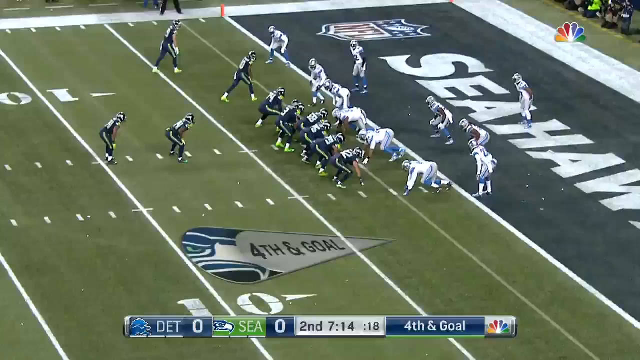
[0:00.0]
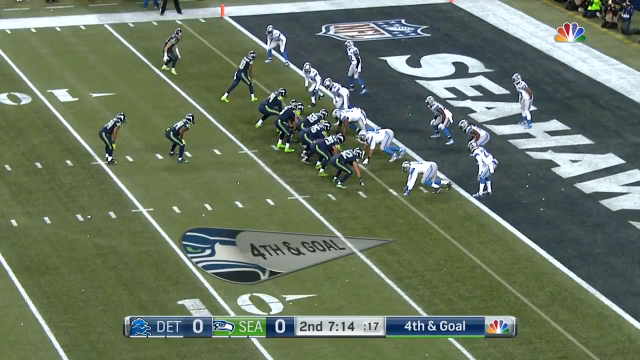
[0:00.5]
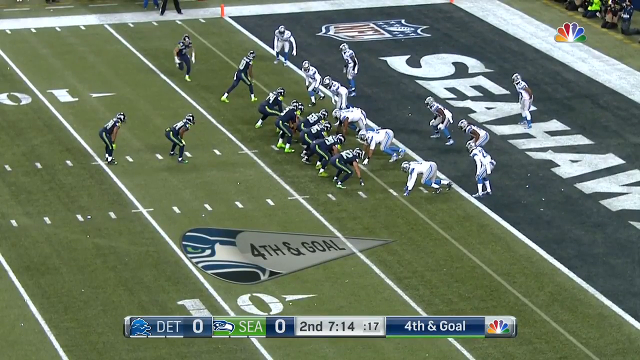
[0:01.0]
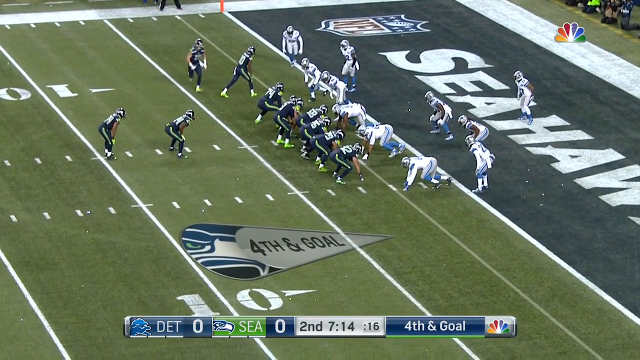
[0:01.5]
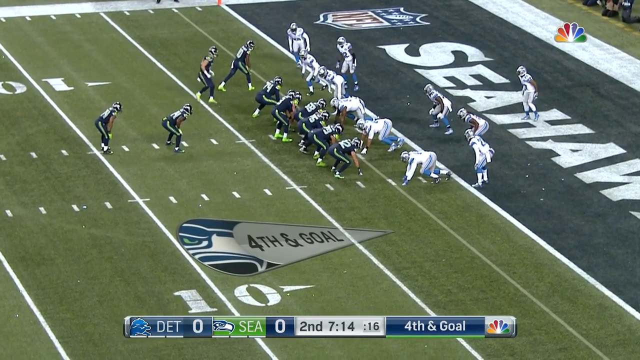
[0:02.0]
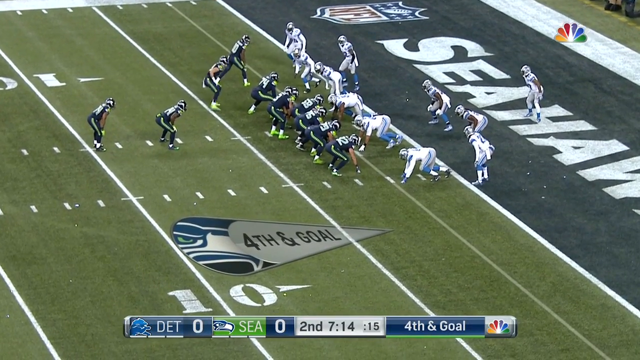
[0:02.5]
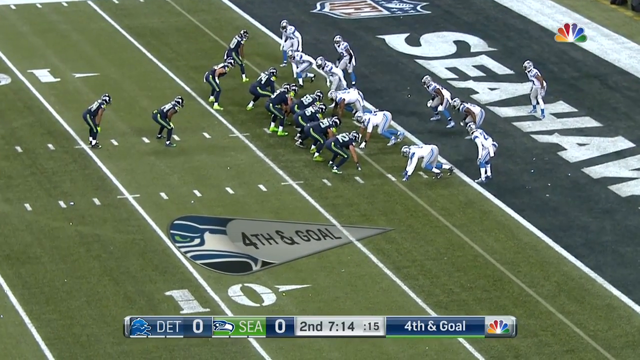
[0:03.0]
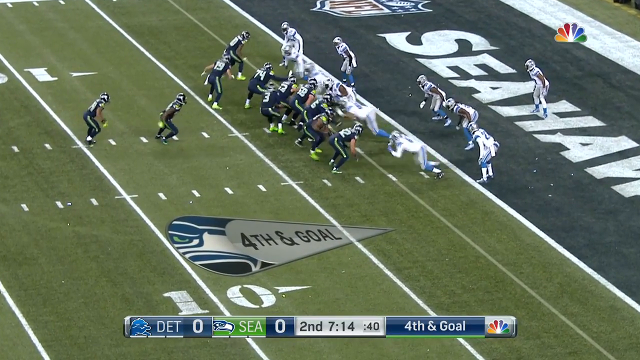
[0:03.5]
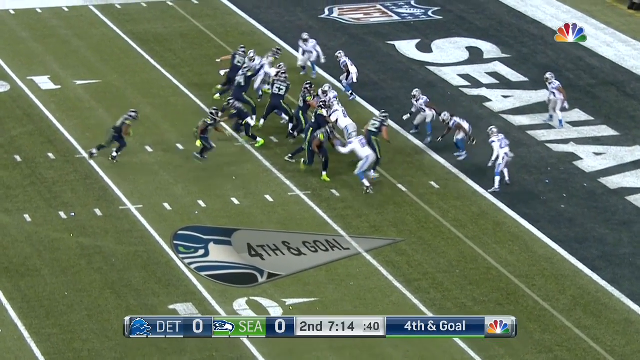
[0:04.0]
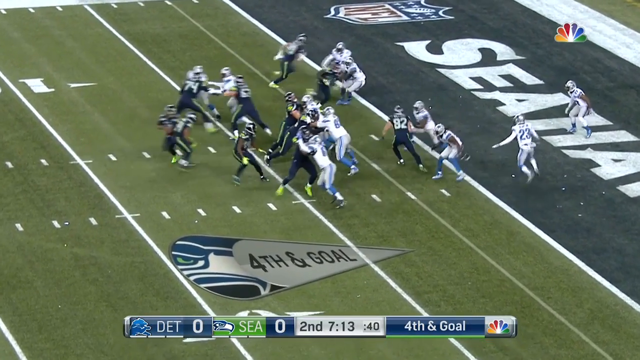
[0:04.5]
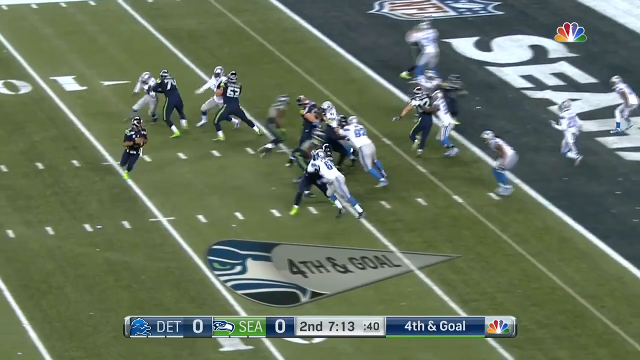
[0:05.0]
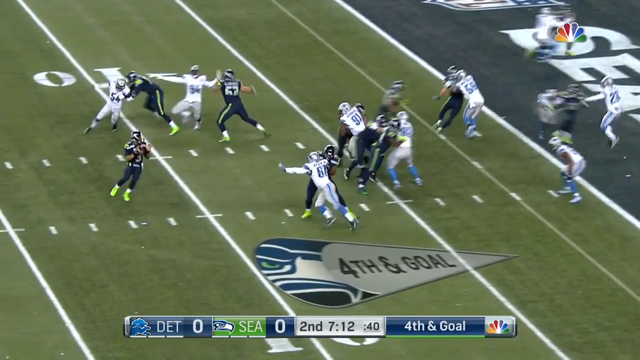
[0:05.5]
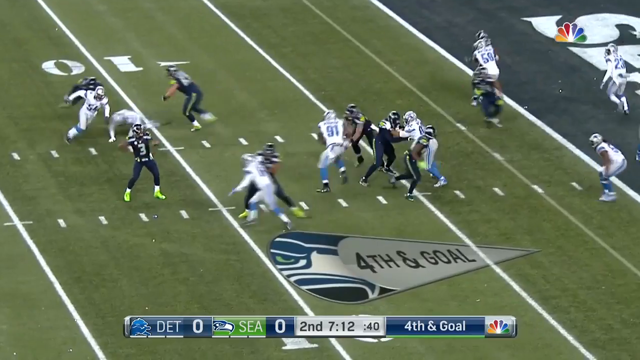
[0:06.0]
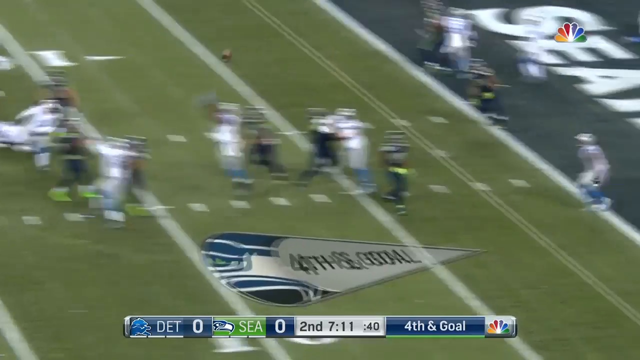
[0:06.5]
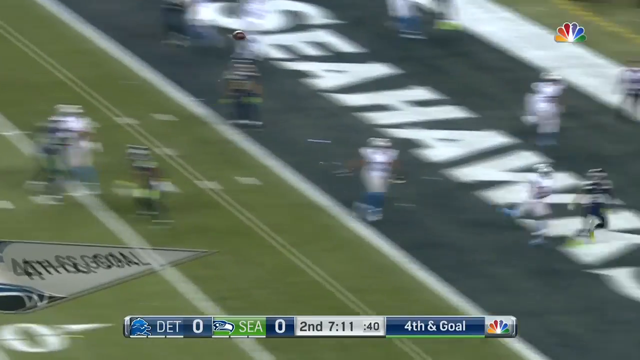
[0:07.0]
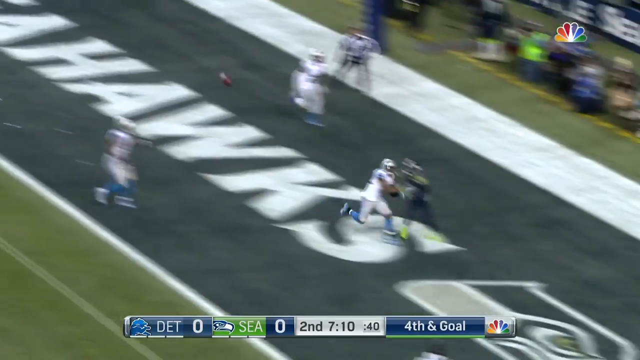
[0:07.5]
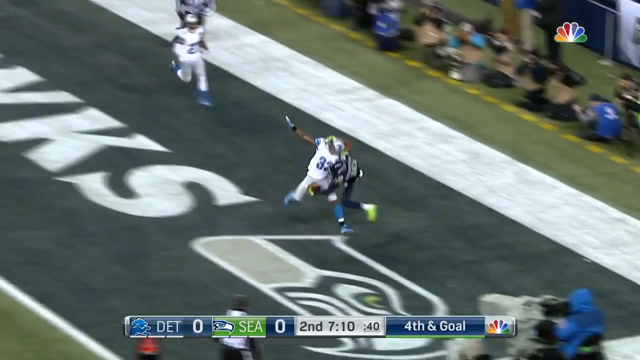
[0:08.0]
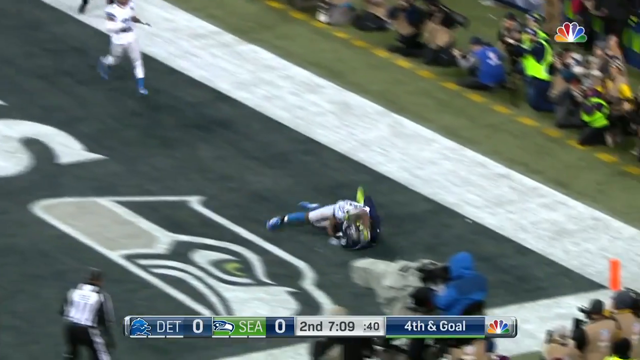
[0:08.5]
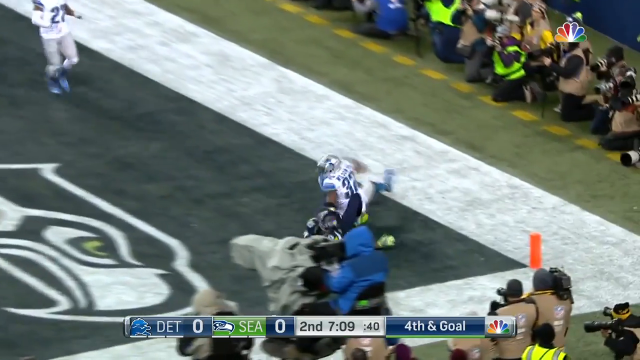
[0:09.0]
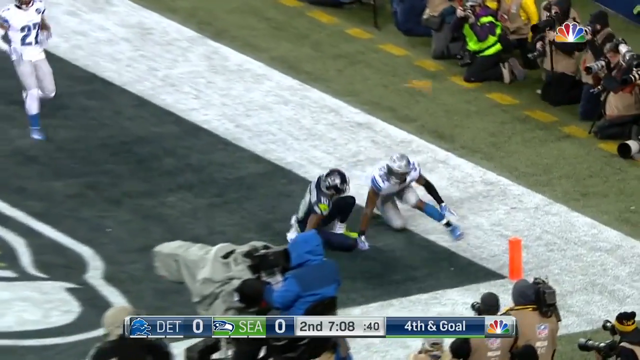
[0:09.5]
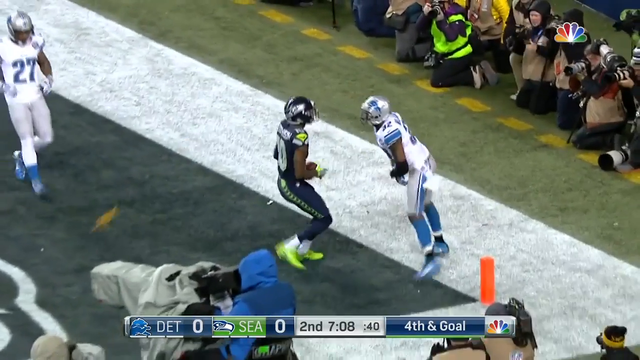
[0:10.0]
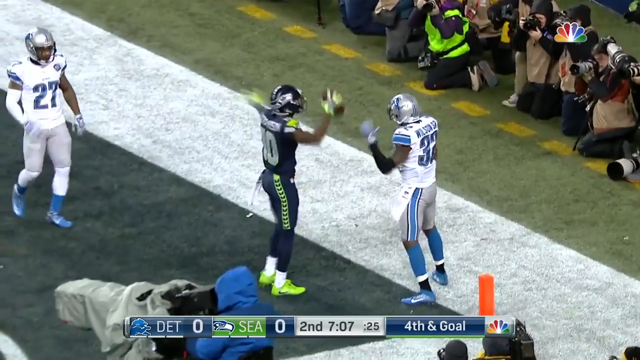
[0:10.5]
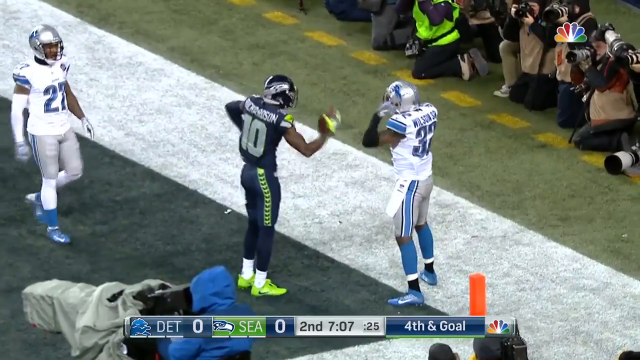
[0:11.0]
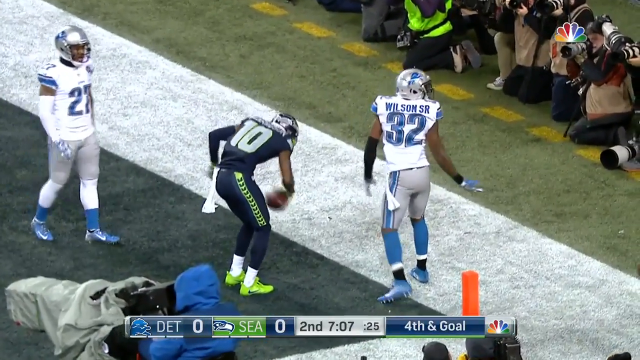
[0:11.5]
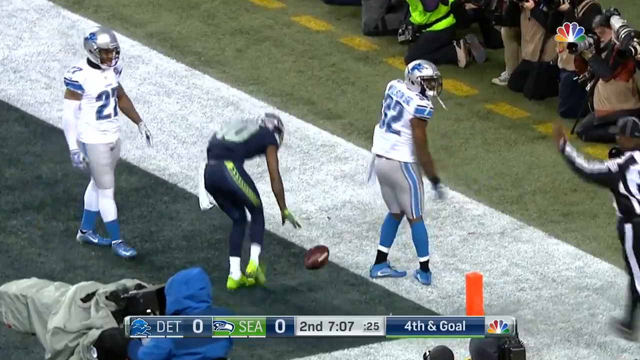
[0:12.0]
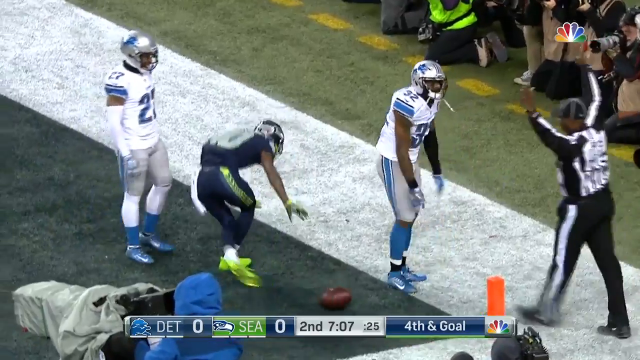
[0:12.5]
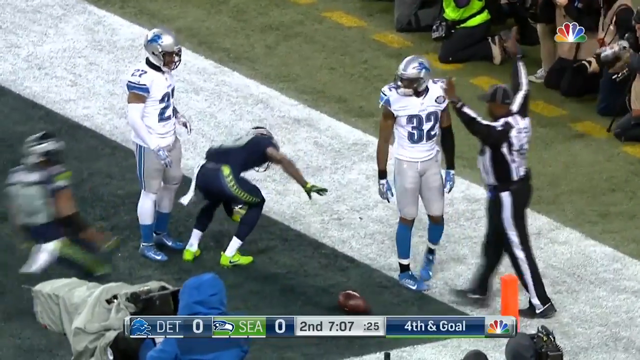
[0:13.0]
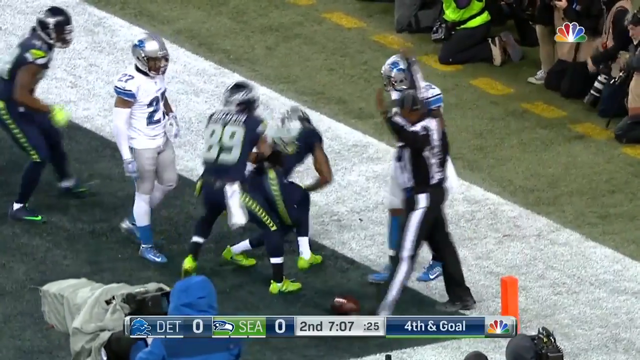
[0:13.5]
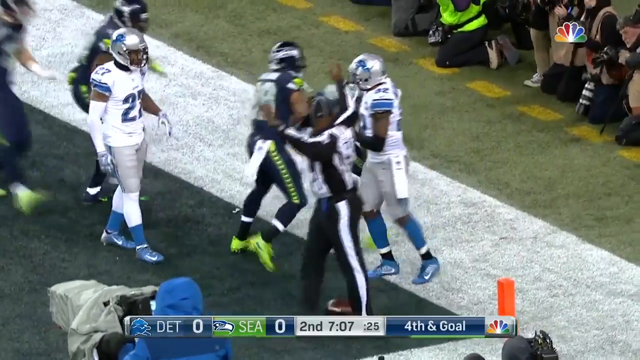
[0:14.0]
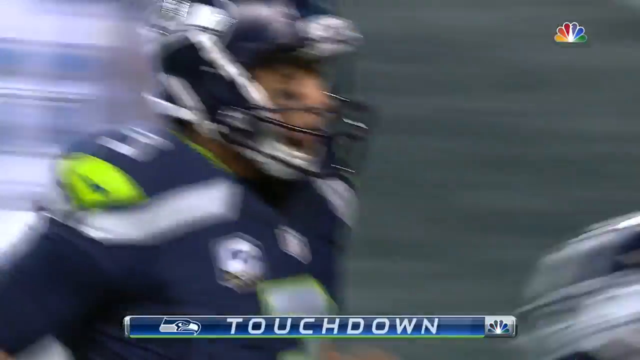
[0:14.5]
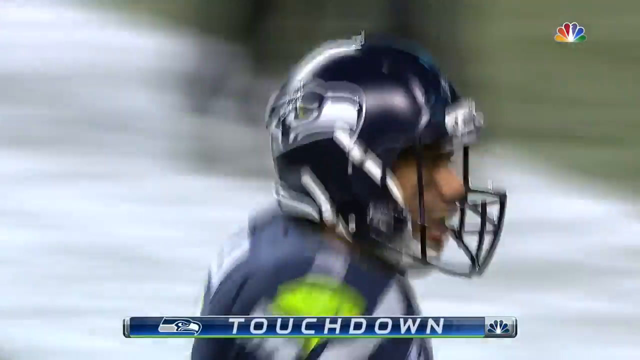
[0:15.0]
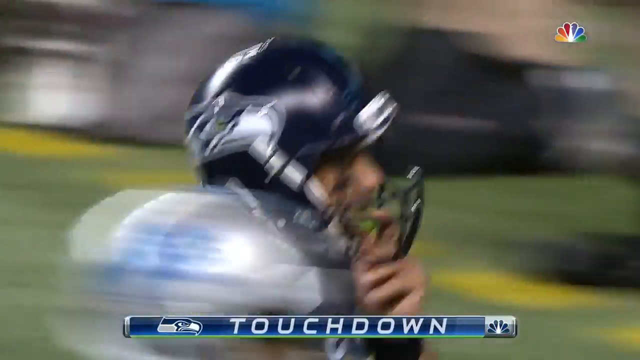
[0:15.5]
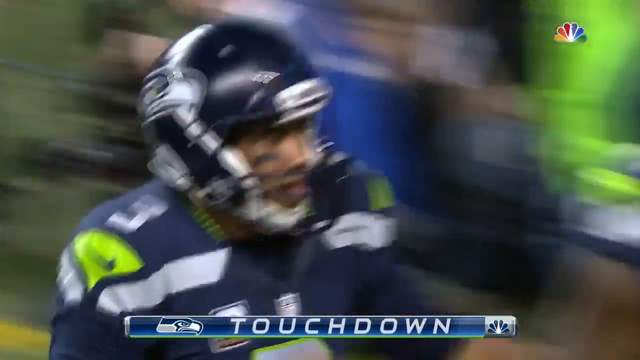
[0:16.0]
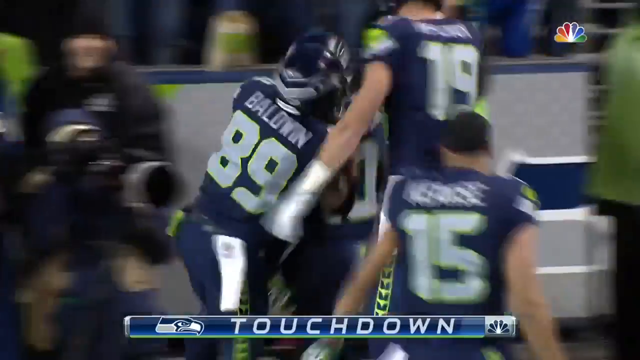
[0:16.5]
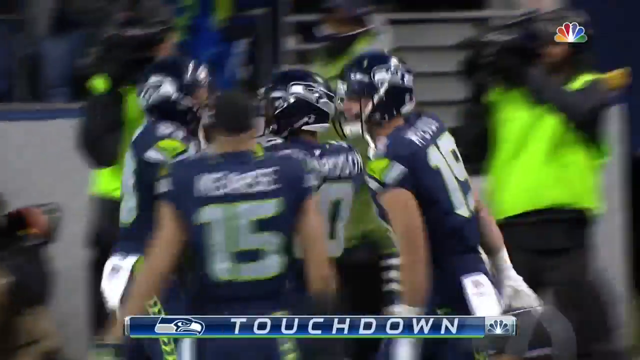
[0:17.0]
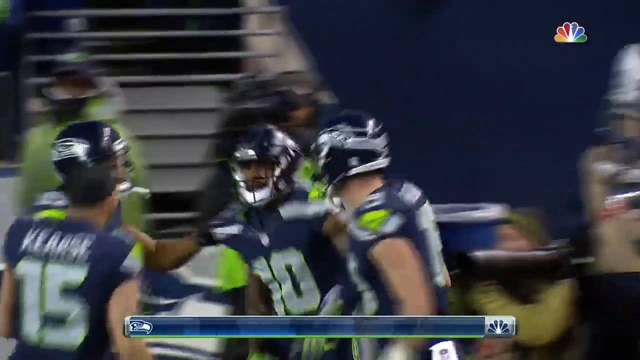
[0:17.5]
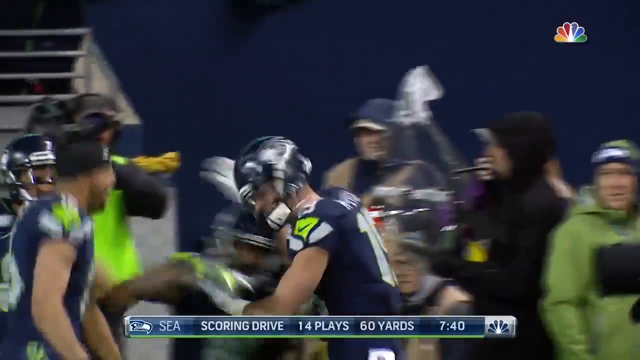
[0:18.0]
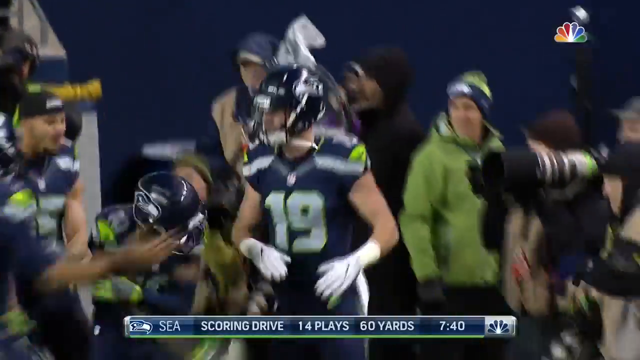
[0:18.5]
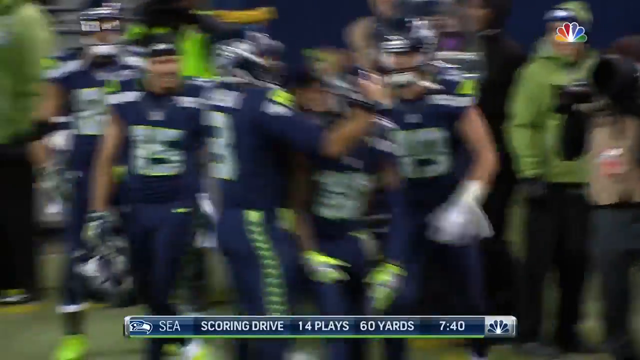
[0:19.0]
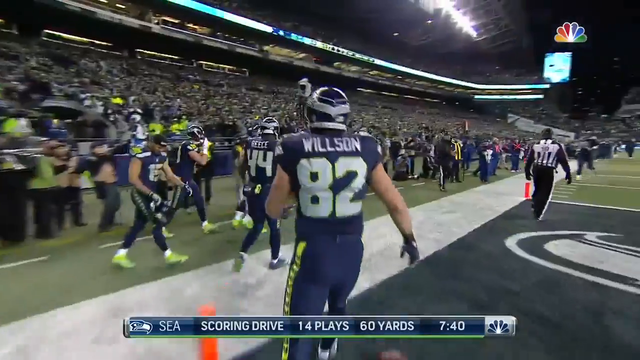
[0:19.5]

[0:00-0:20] An NFL game between the Detroit Lions and the Seattle Seahawks, in Seattle, is shown. It is the second quarter with 7 minutes and 14 seconds left, 16 seconds on the play clock, and fourth and goal. The Seahawks appear to be lined up at the two-yard line while the Lions guard the end zone. The Seahawks quarterback takes the snap, fakes a handoff to the running back, and throws to a wide receiver, who catches the ball with one hand and falls into the end zone for a touchdown. The receiver begins to dance between two Lions players; the Lions player on the right is Wilson Sr., number 32, and the Seahawks receiver who made the catch is Richardson, number 10. A referee walks from the corner of the end zone with his arms up, signaling a touchdown. Seahawks players run over to celebrate with Richardson, and the shot ends on a view from behind of many Seahawks players.